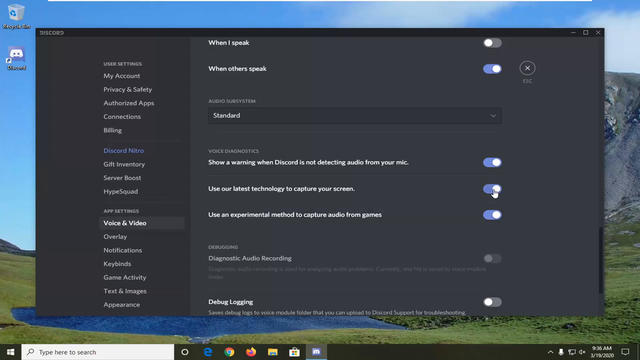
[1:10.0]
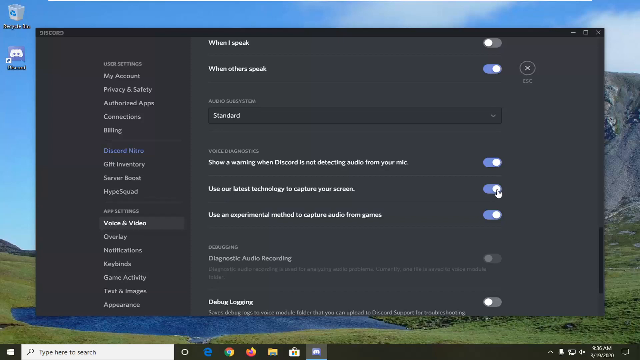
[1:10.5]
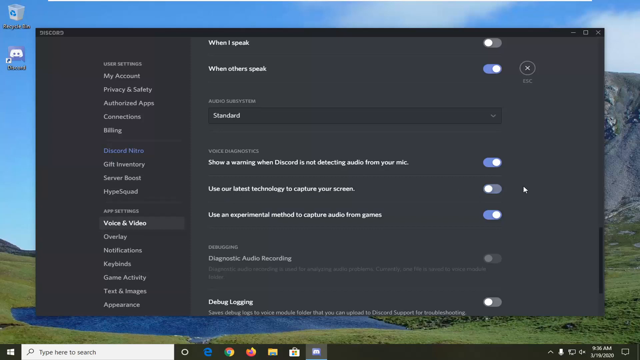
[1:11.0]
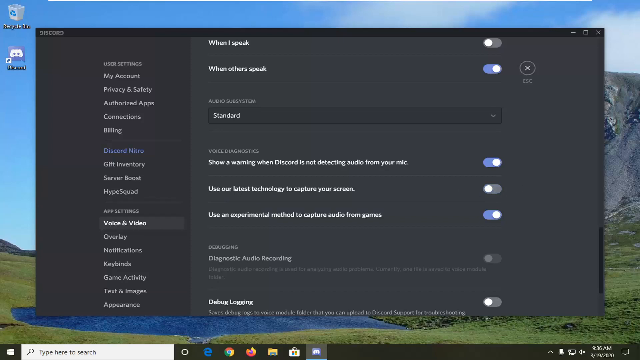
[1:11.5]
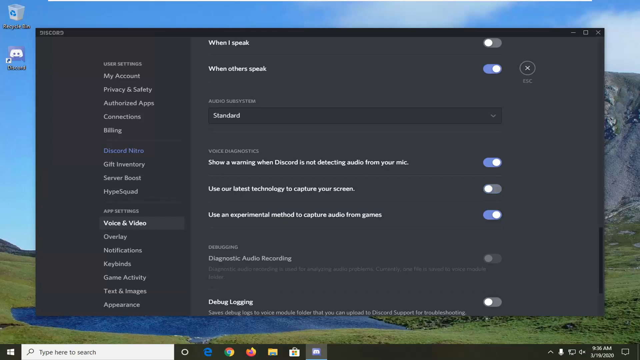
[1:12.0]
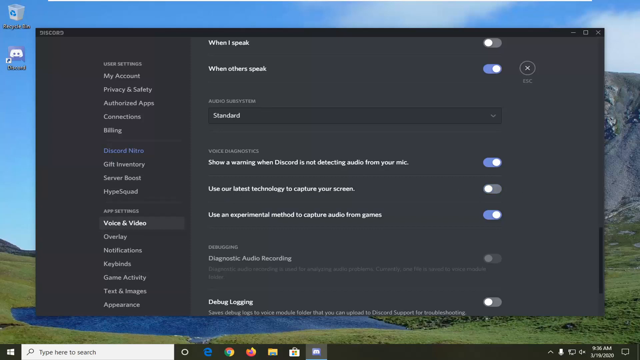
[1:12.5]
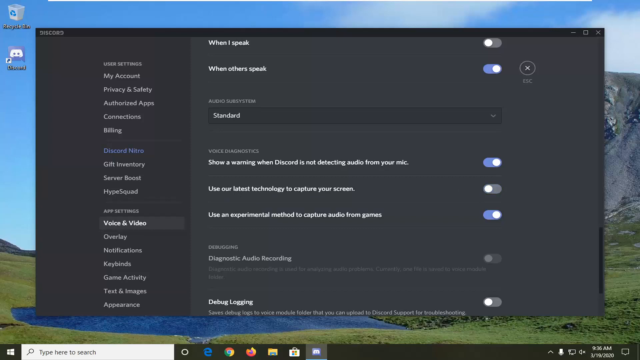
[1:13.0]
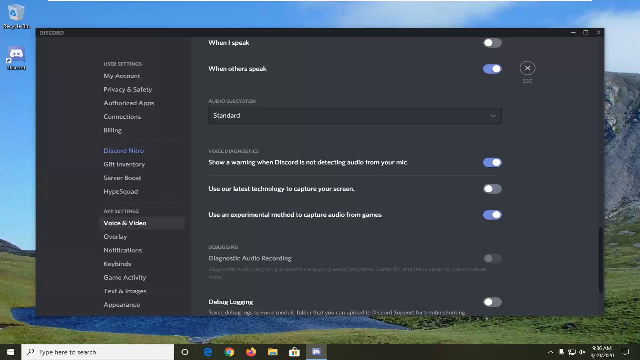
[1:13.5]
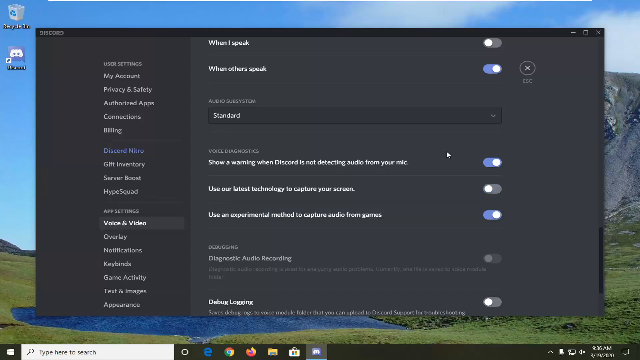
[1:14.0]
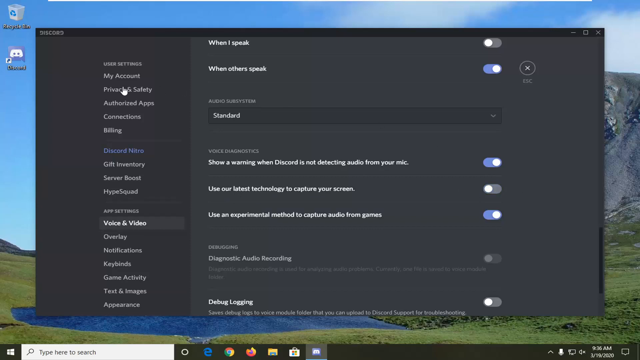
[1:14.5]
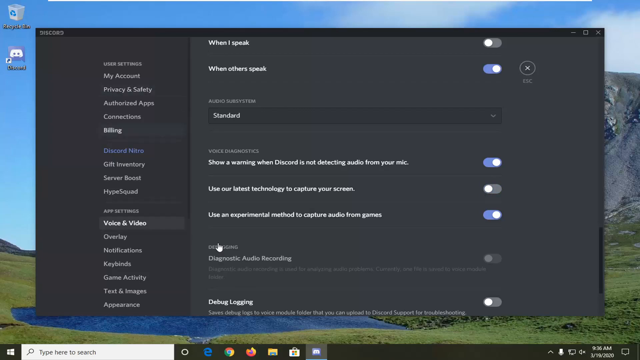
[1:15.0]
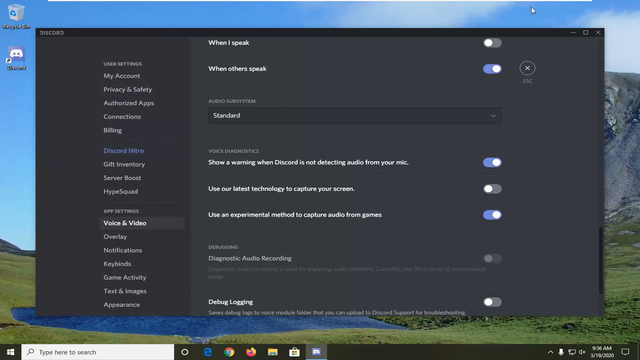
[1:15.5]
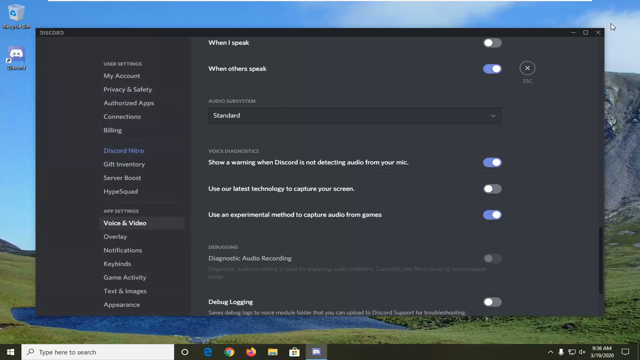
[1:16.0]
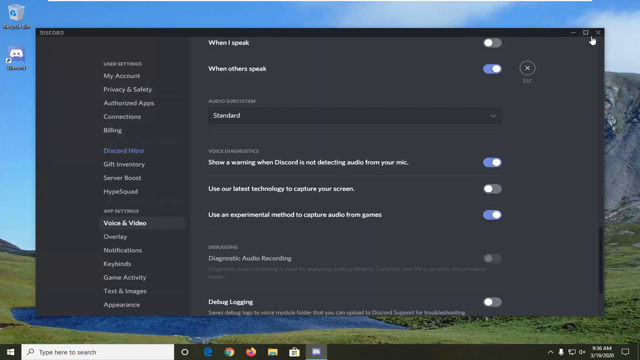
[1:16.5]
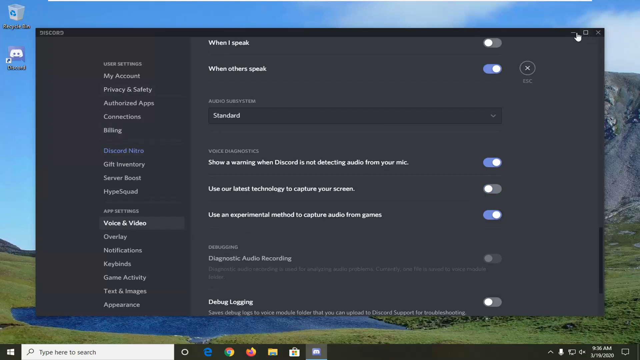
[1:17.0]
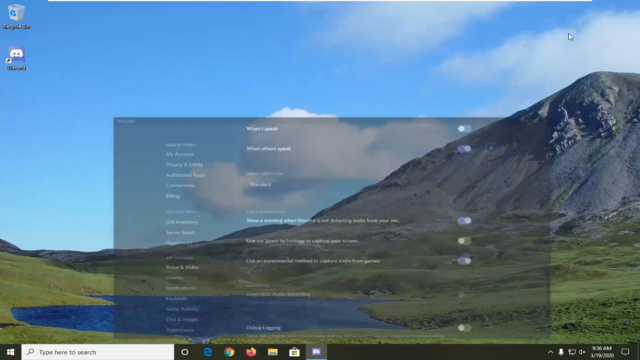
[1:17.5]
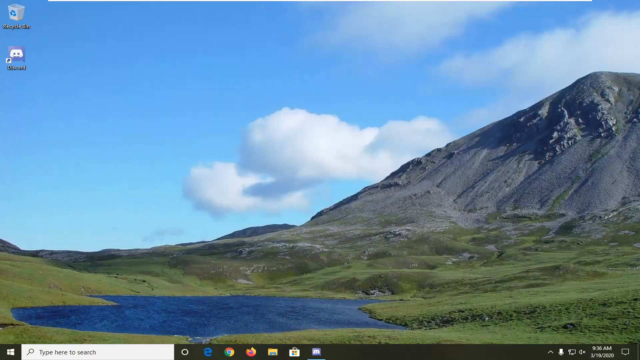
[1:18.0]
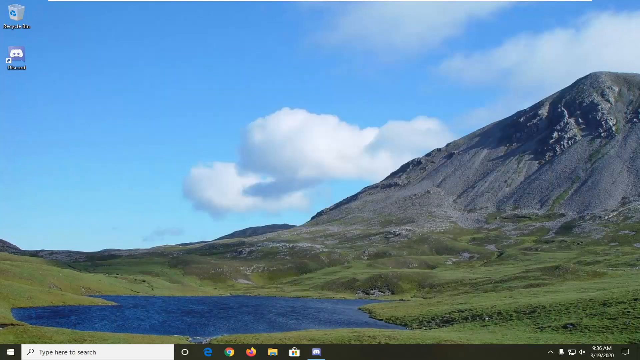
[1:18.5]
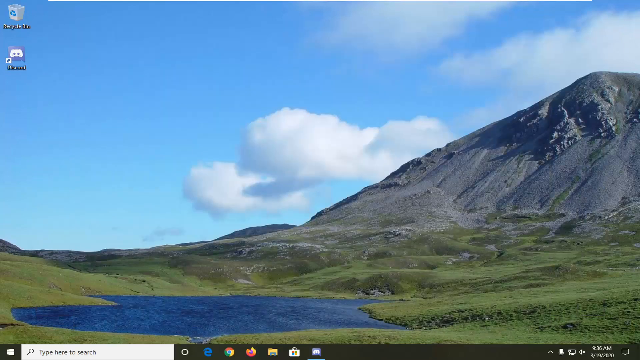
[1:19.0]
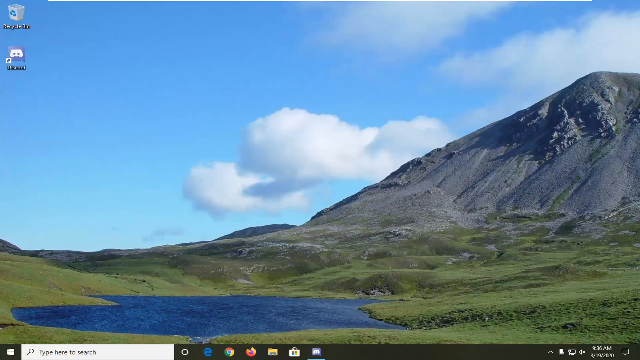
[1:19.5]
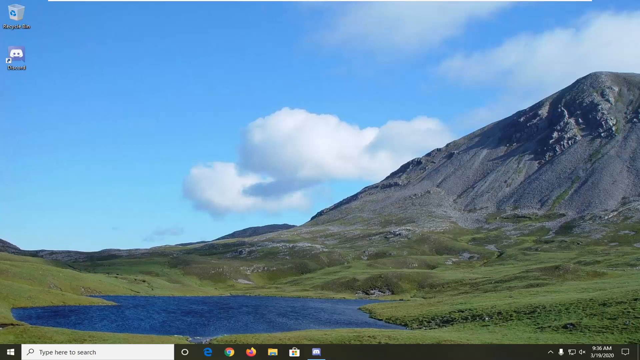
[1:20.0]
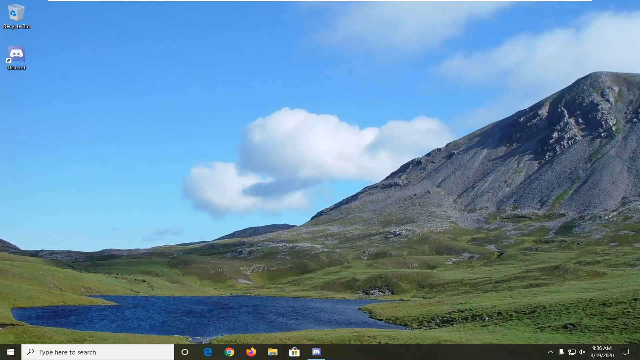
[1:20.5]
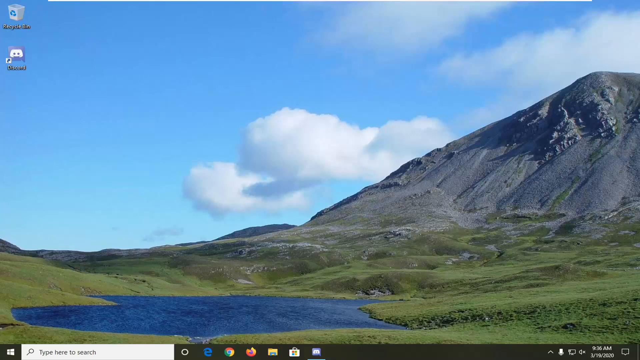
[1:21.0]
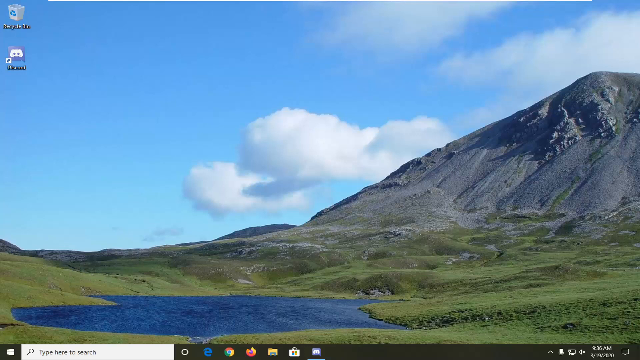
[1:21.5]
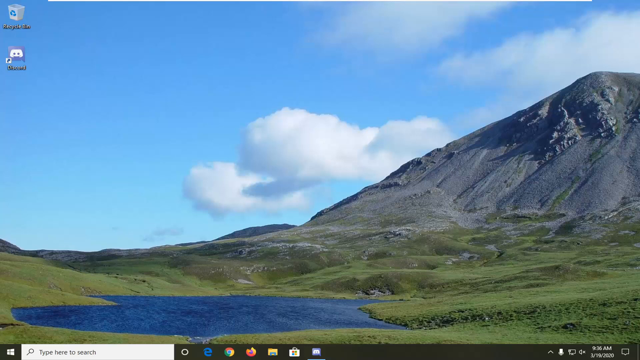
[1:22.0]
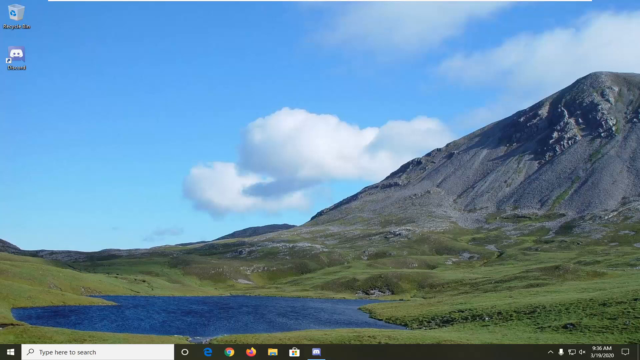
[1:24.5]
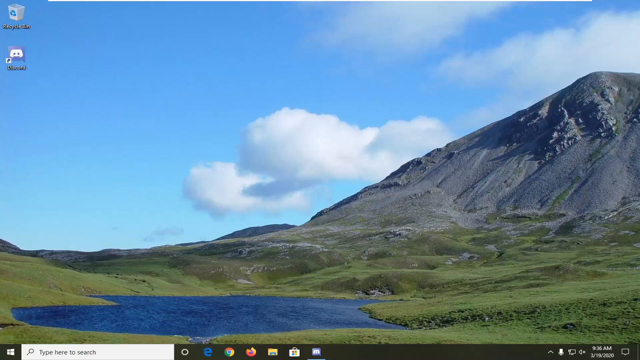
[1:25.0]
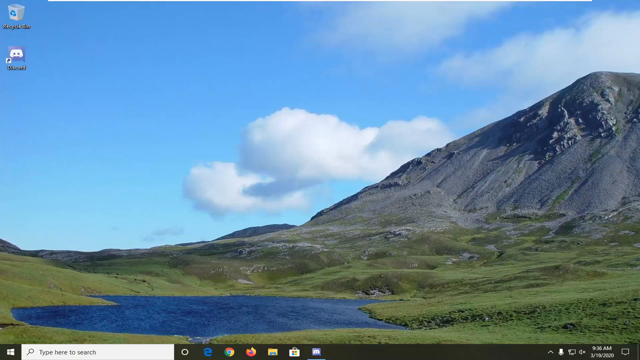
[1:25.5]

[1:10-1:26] The Discord app is open, and the mouse hovers over the "use our latest technology to capture your screen" toggle, then turns it off. The mouse hovers around the entire screen and then minimizes the window, returning to the desktop background with the tall gray mountain. The Discord app then opens again, and the sequence apparently repeats itself. Finally, it closes.